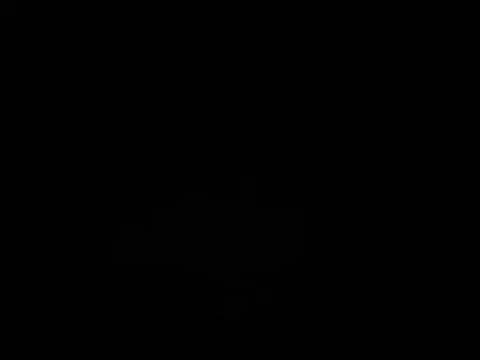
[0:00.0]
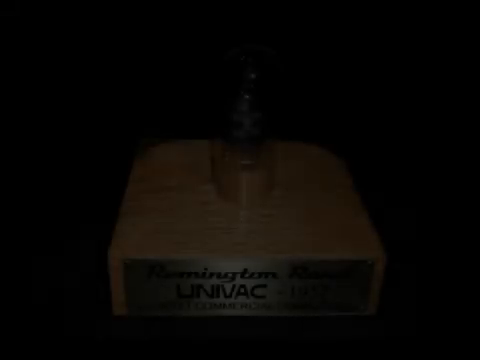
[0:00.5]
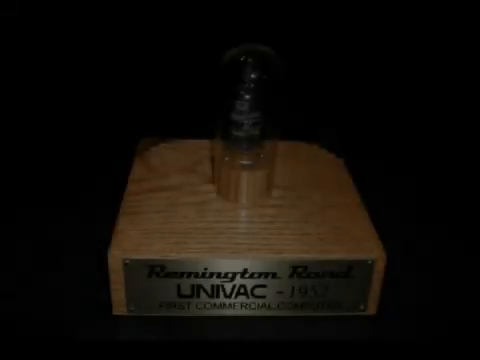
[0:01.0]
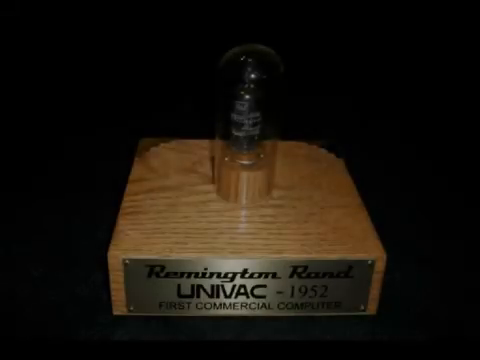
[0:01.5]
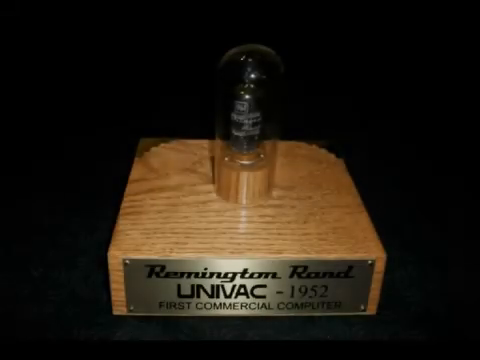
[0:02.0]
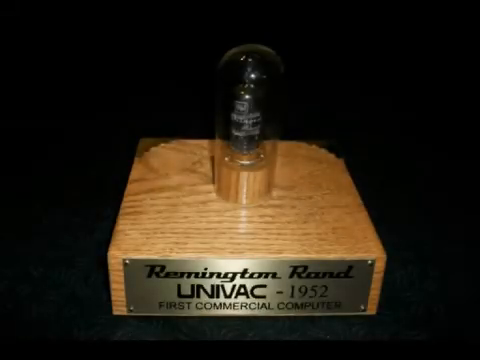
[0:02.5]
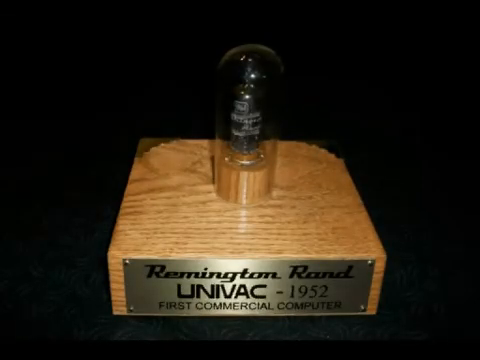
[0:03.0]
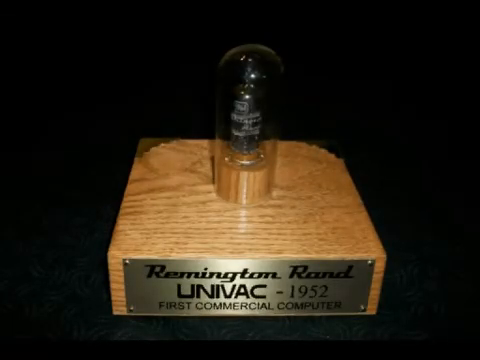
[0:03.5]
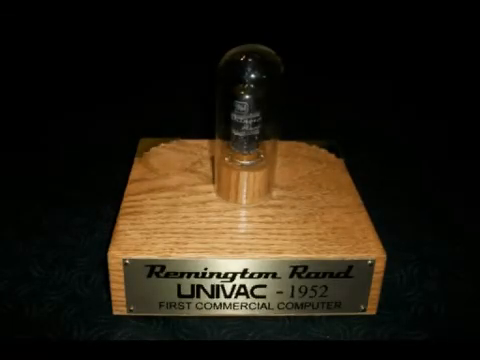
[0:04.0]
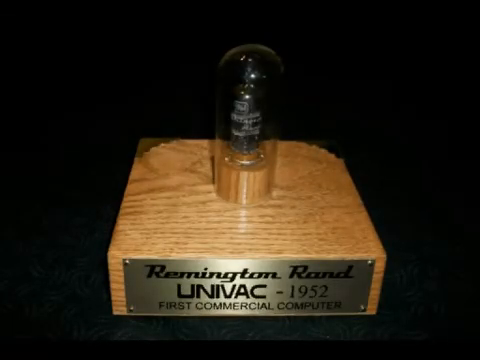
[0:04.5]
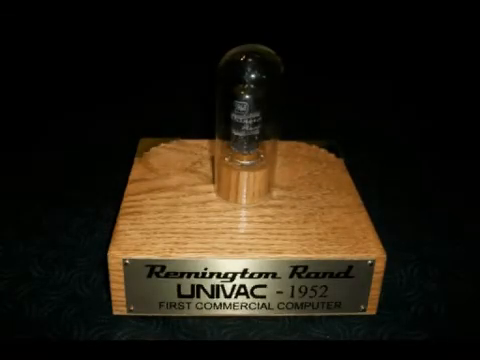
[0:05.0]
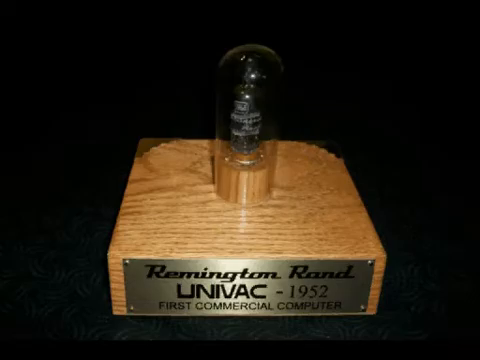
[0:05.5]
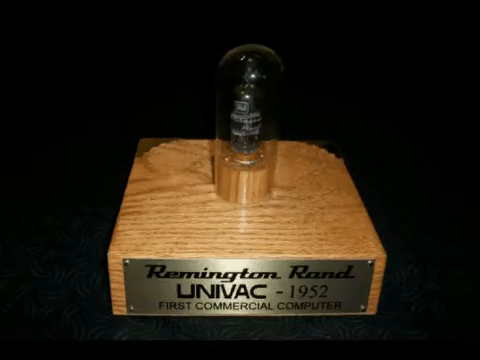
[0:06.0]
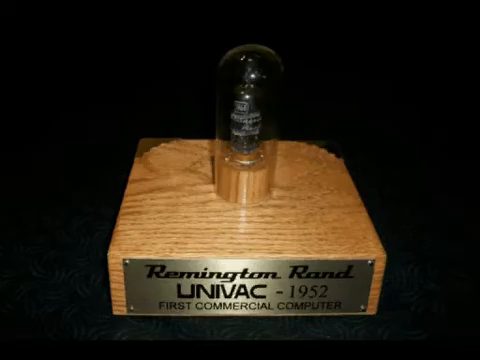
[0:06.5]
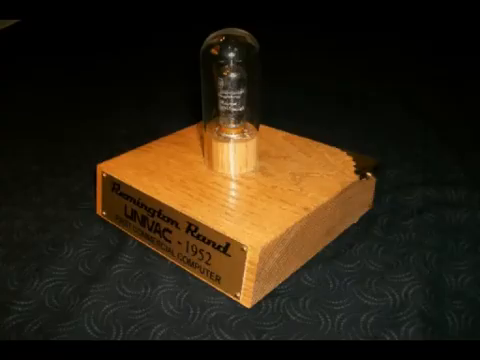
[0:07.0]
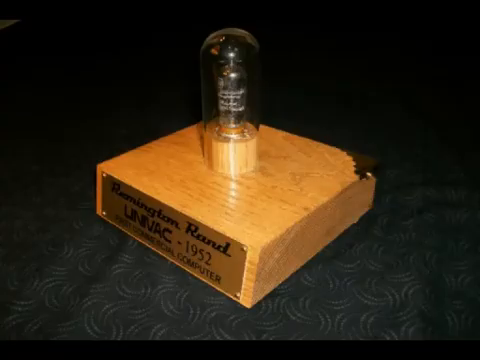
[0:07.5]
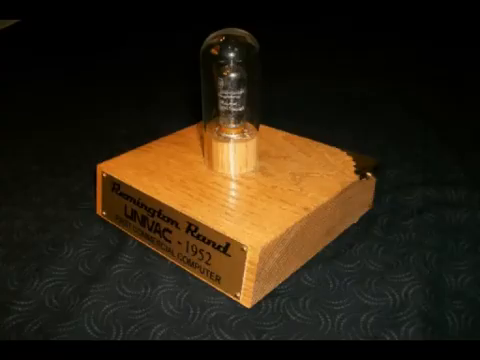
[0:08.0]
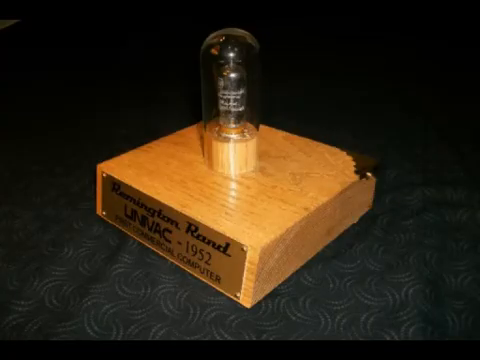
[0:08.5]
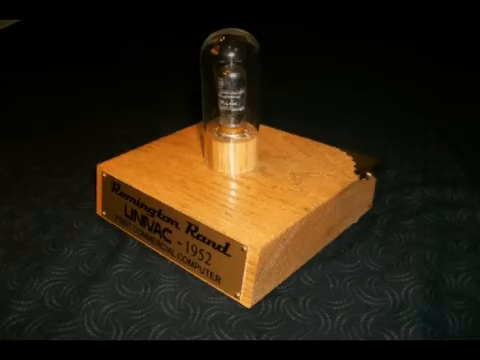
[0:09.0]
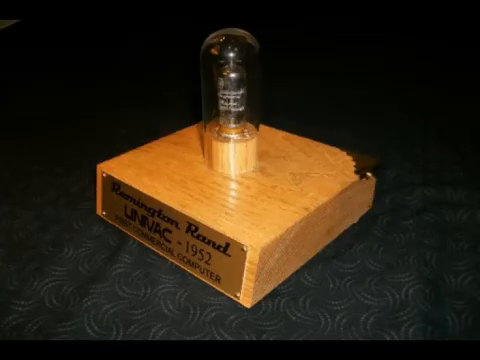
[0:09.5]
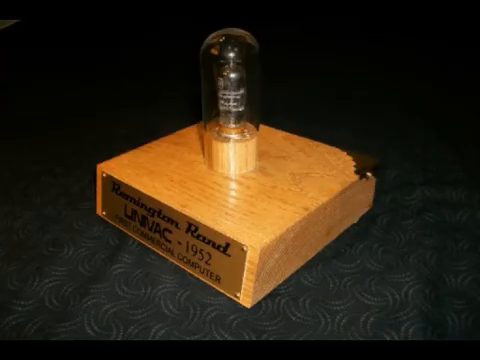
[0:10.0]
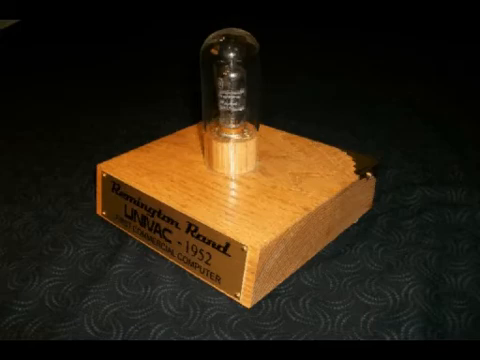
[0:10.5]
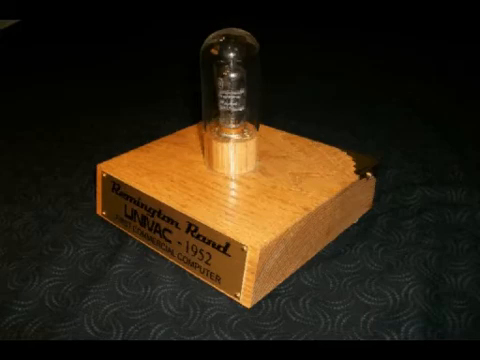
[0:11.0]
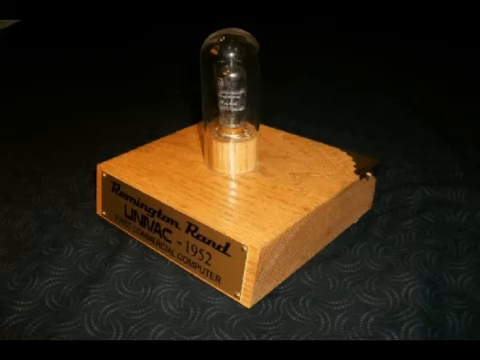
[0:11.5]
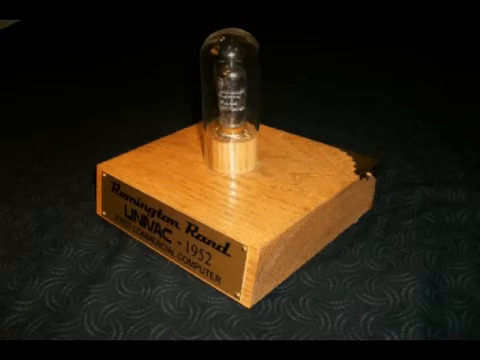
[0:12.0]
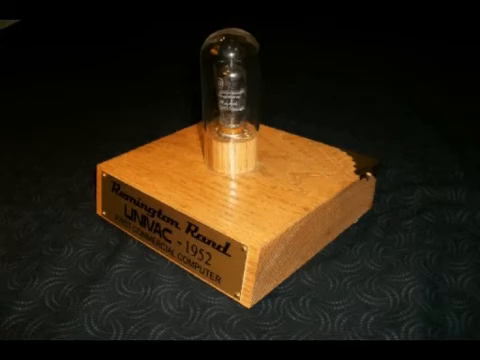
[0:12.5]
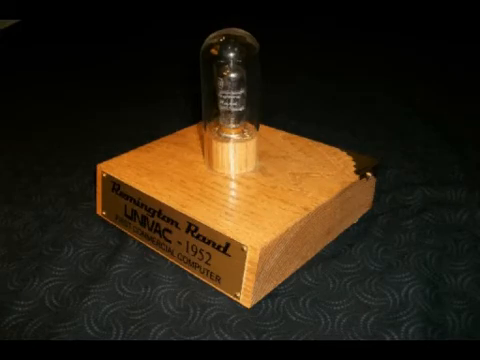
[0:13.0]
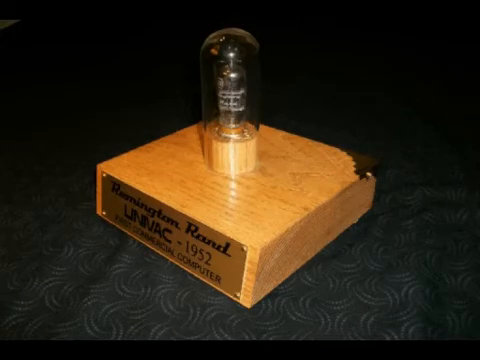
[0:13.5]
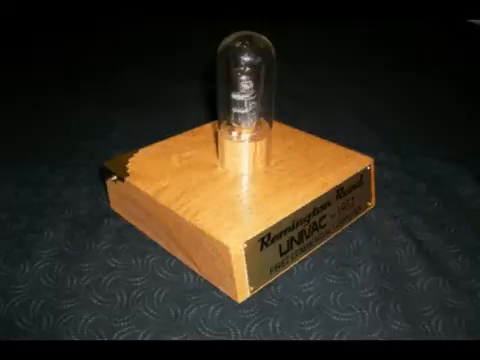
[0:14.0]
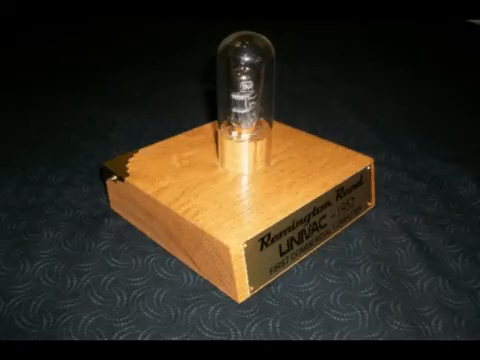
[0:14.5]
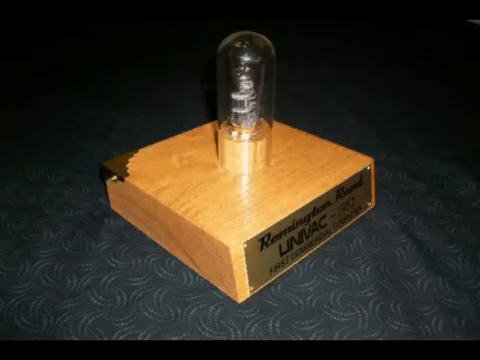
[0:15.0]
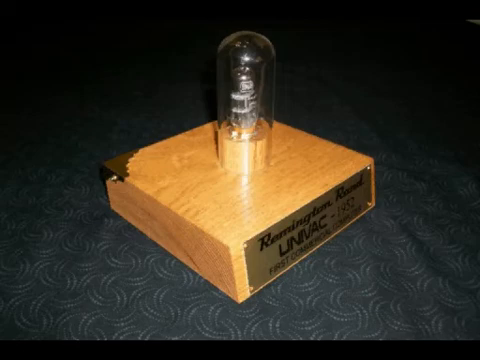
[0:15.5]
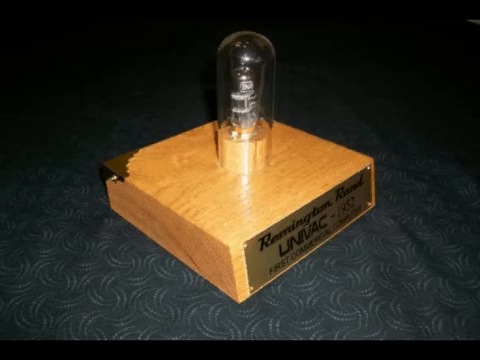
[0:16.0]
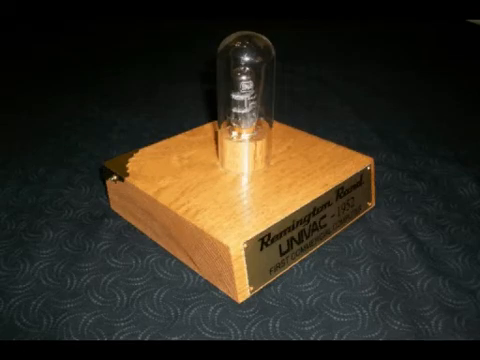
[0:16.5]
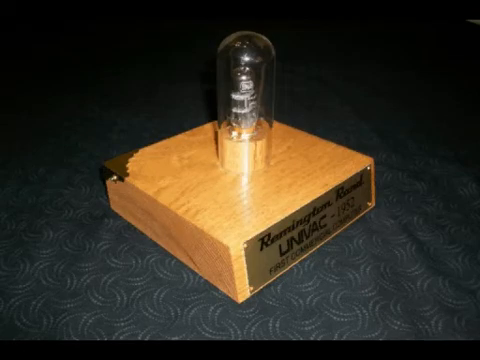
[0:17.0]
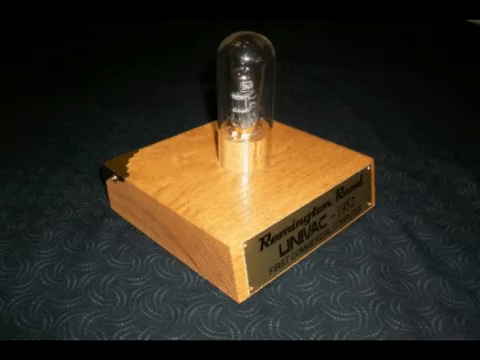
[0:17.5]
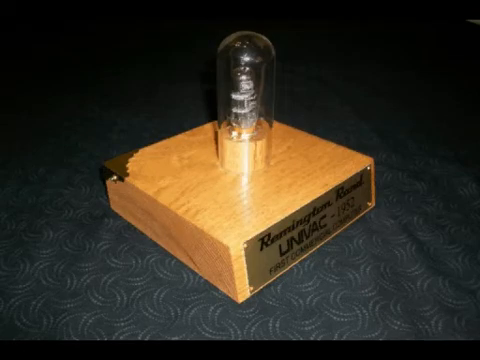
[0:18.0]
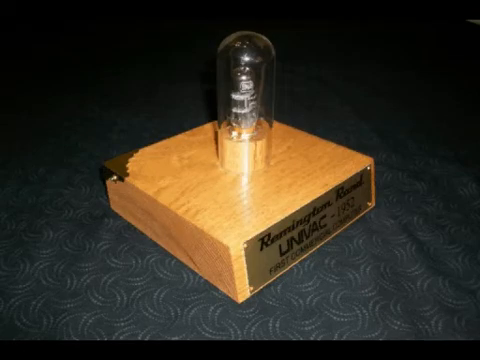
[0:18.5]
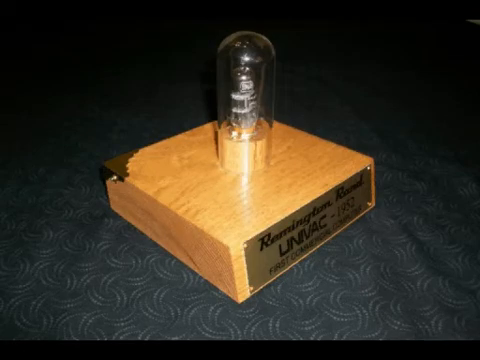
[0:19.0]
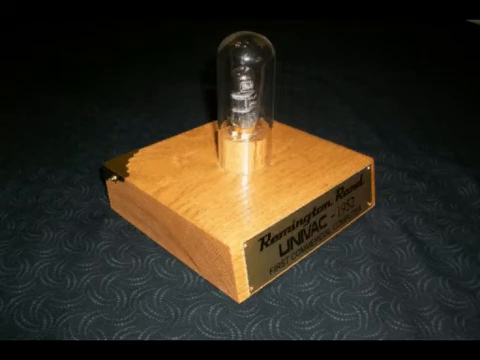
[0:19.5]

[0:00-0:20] The video begins in darkness, and slowly a light illuminates an object in the center. The object has a rectangular wooden platform, and on its front is a brass nameplate. The top row reads "Remington Rand", apparently in cursive; the middle row reads "Univac", followed by a dash and the year "1952"; and below that it reads "First Commercial Computer". The middle and bottom rows are in all caps. A screw in each of the four corners of the plate attaches it to the front of the wooden platform. In the middle of the platform is an upraised circular wooden section, and there is a light bulb. The camera first has a front view of the object, then an angled view from the right shows that the back right corner has a damaged portion of wood that is blackened, as if a chip had broken off. The camera then shows an angle from the left, where the back left corner looks like it was damaged.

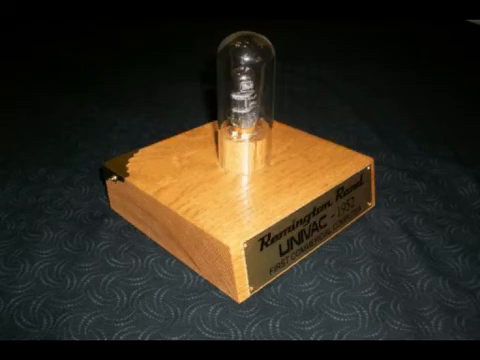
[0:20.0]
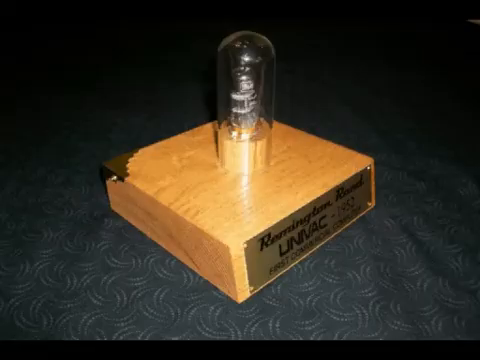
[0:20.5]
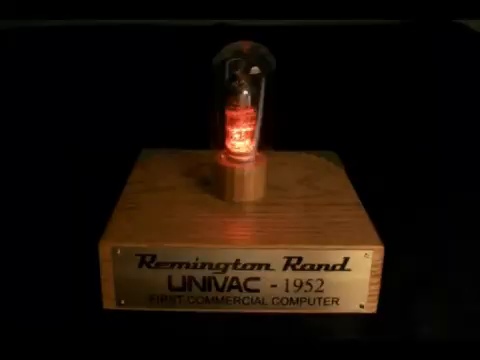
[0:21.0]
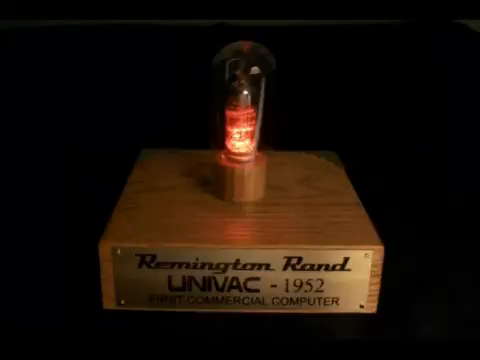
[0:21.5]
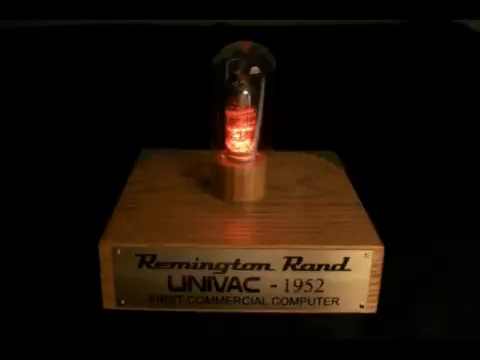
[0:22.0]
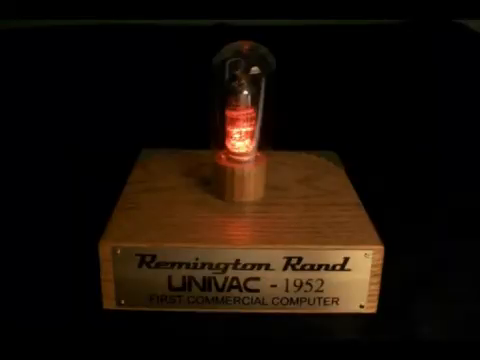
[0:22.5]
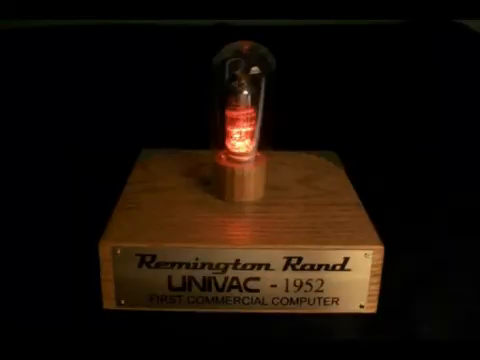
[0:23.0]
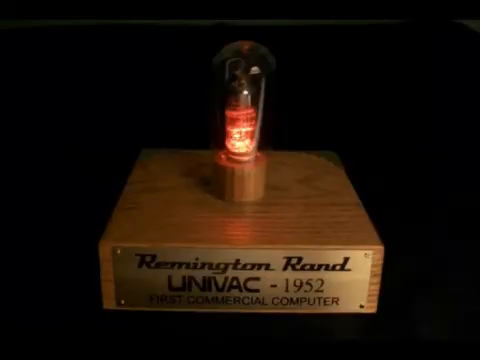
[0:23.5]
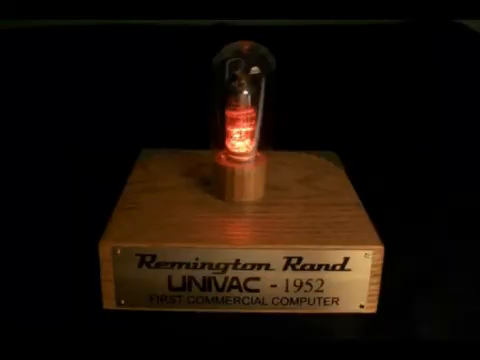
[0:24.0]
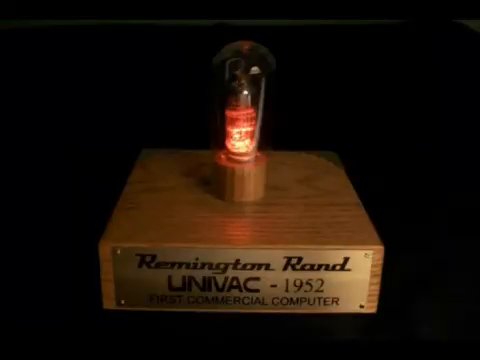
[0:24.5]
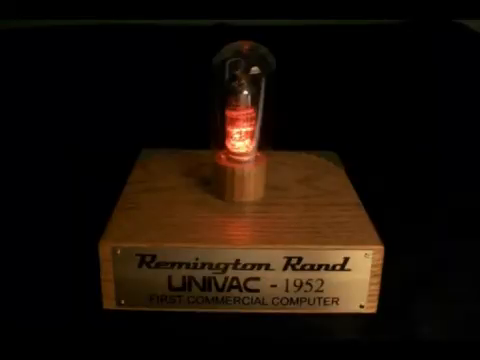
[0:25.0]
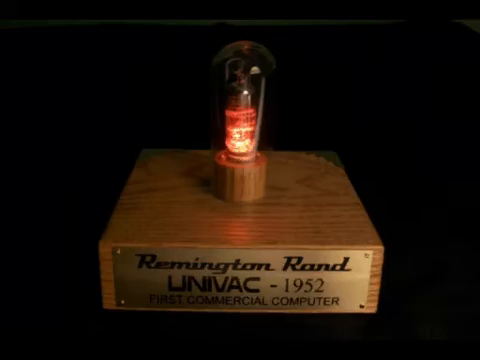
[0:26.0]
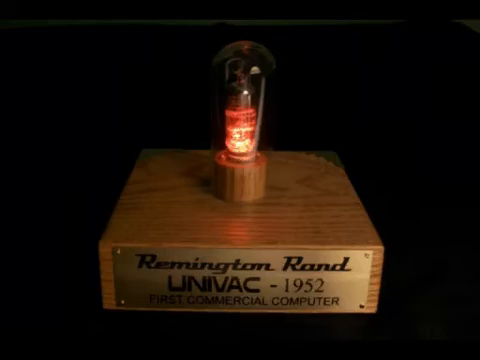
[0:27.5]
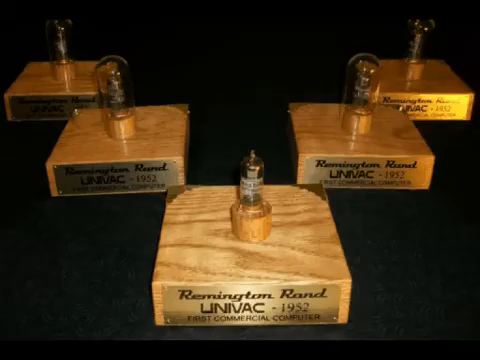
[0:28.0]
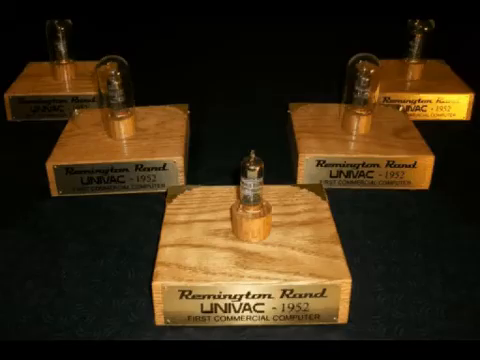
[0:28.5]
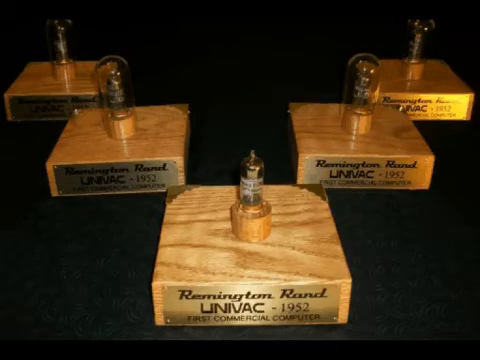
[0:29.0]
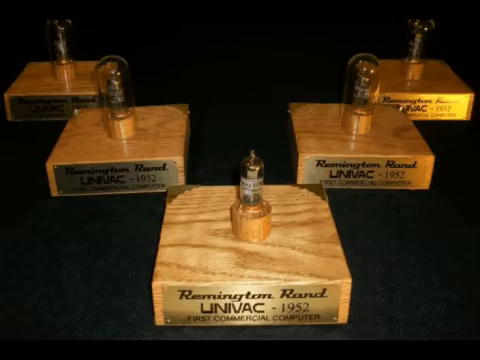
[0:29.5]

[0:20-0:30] An object is in the center, filmed from in front. It has a wooden base, and on its front is a brass plate. The top row reads "Remington Rand", written in cursive slanting to the right. The second row reads "UNIVAC-1952" in all caps, and the third row reads "FIRST COMMERCIAL COMPUTER", also in all caps. The plate is attached to the front of the wooden block with bolts or screws in each of the four corners. A light bulb of some sort is on top of the wooden block, and it is illuminated so that yellow and red are visible. The video then shows five of these items arranged in three rows: one in the front row, two in the second row and two in the third row.